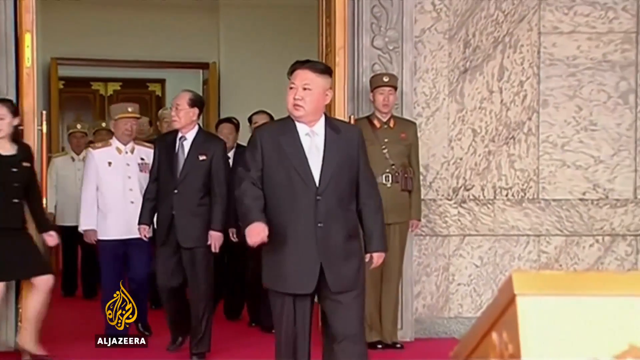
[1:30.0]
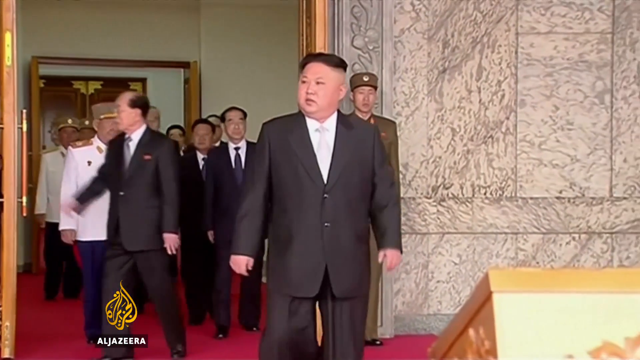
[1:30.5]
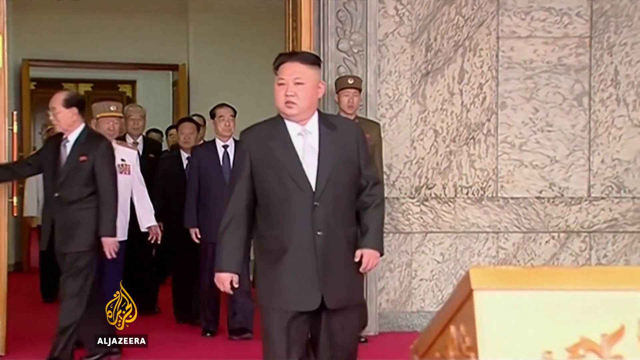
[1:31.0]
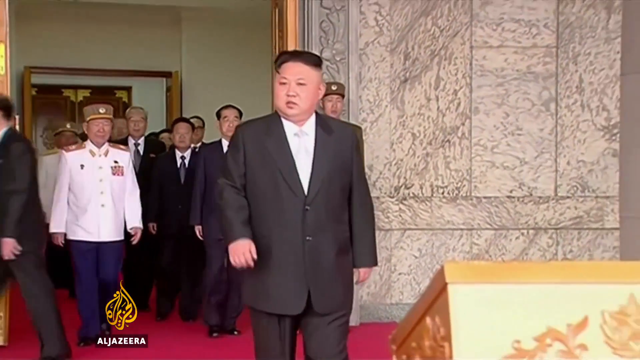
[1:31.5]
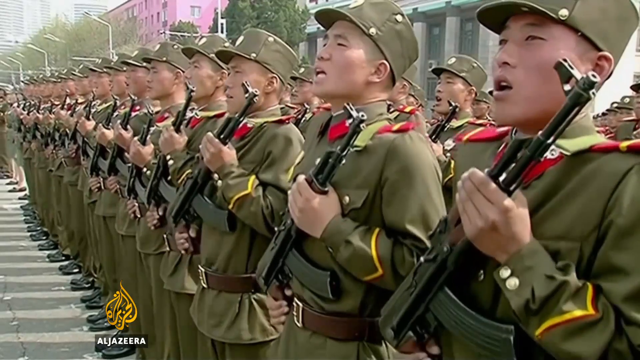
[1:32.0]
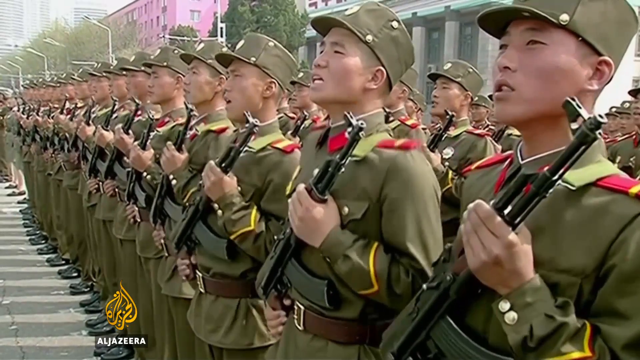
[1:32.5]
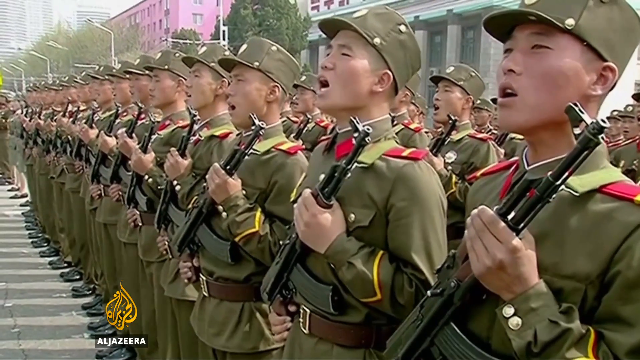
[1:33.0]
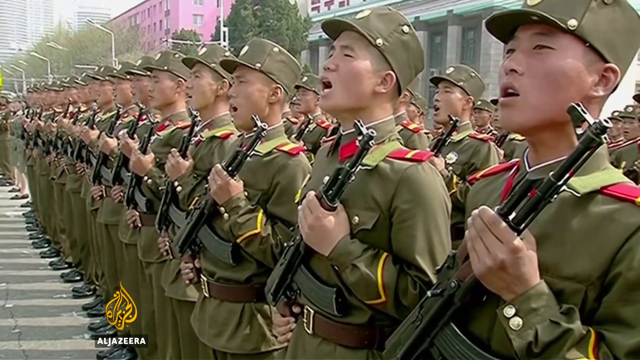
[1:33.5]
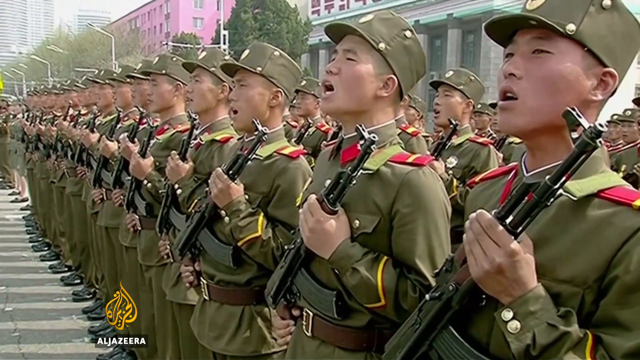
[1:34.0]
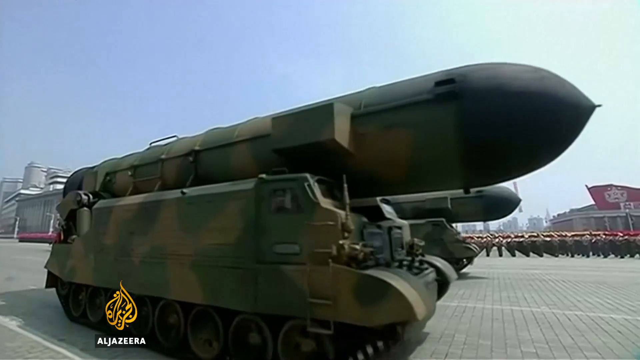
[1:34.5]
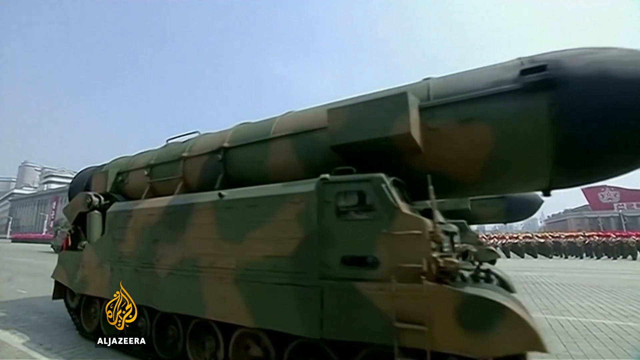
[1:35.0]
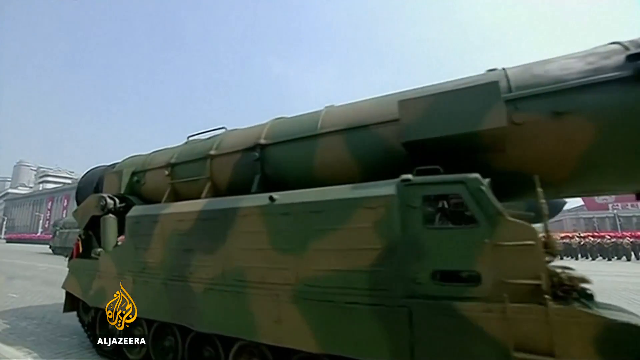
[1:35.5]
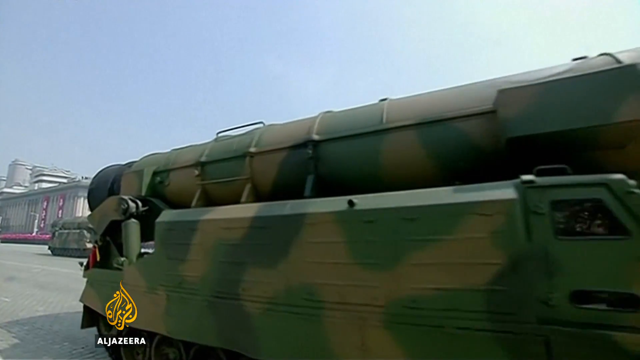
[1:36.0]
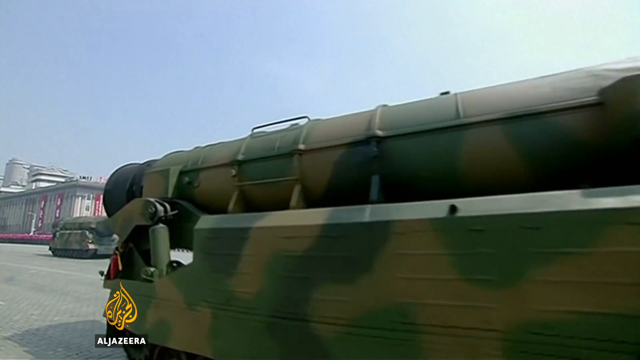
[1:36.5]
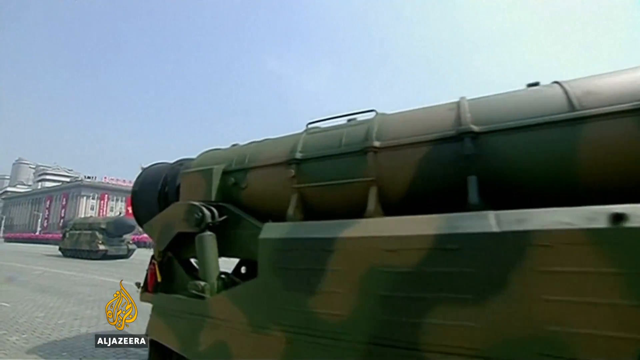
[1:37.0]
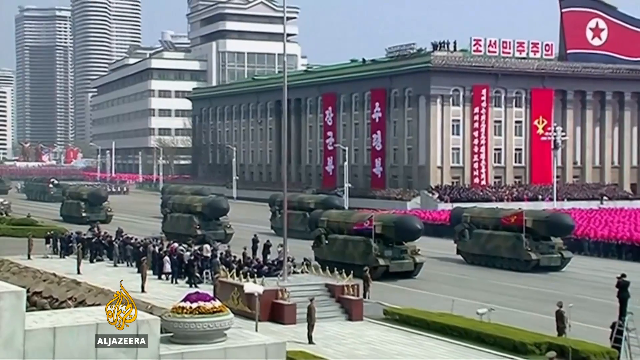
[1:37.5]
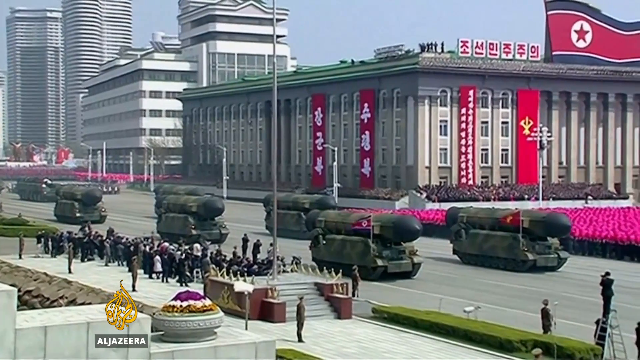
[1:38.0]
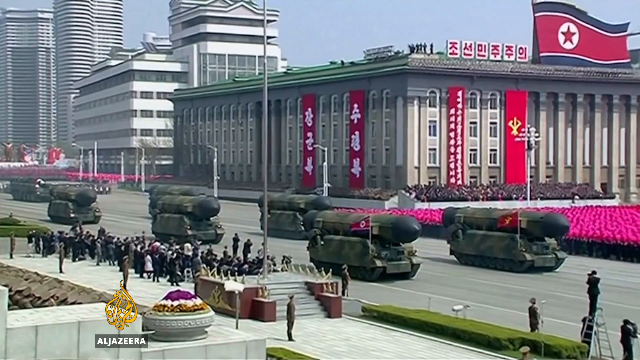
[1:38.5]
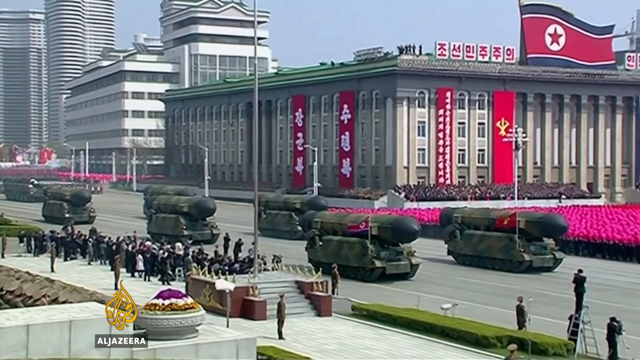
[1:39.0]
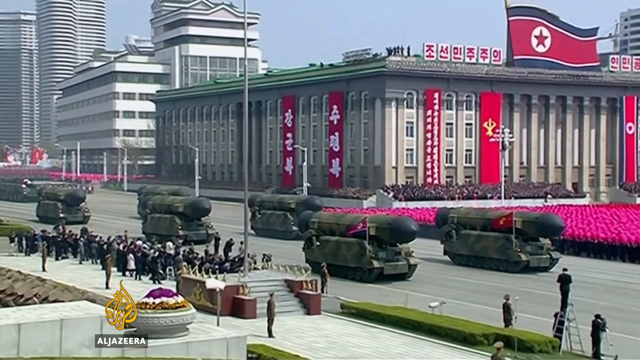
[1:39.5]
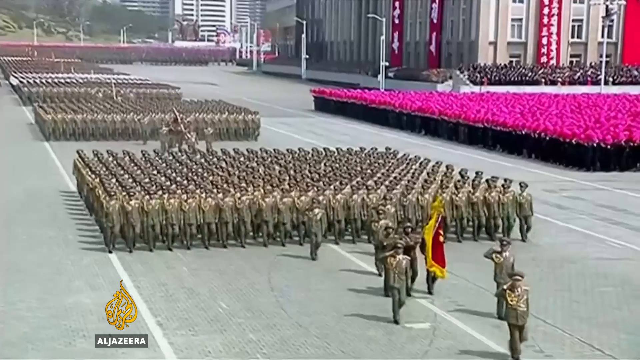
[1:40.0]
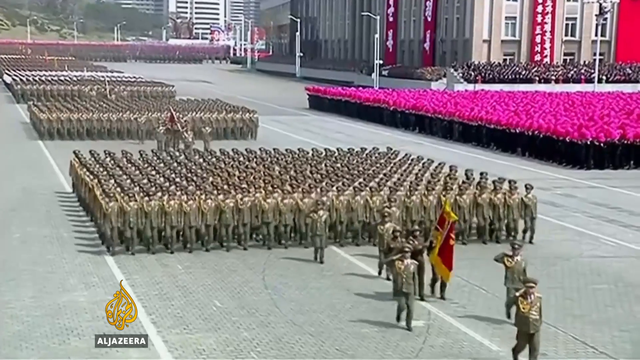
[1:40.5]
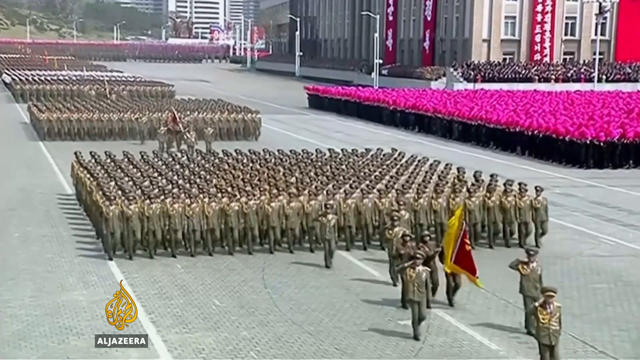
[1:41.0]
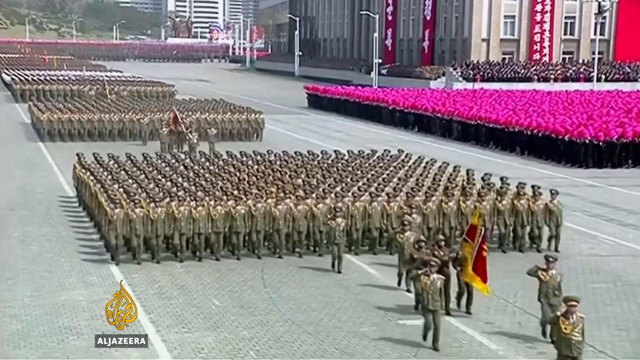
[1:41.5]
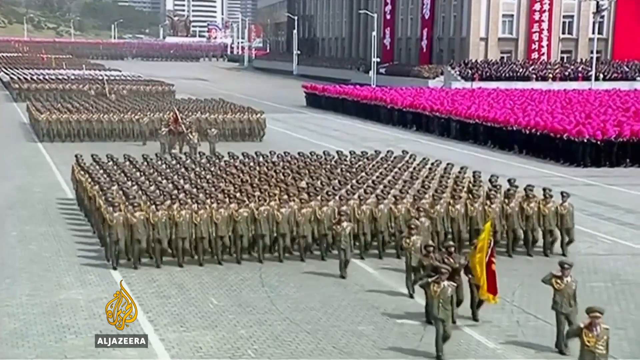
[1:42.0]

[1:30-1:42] A man walks out of a building wearing a black suit, a silver tie and a white shirt. Behind him are a few older men: one guard wears a brown uniform, and the other men behind him wear white army uniforms. Many soldiers then hold guns; they wear green uniforms and green hats and are saying something all at once. A green and brown army car drives past, and several of these army cars drive down the road in a city with buildings, one of which has a flag; the cars have flags as well. Soldiers then walk on the street step by step, all at the same time.